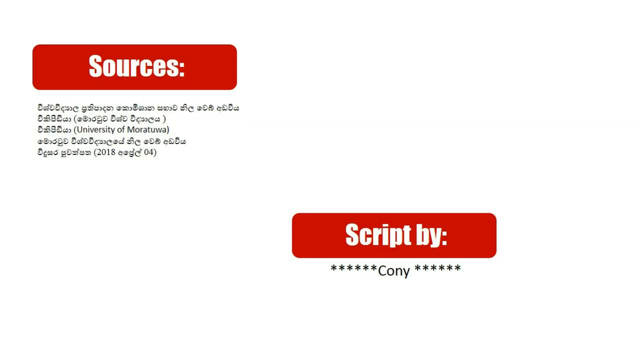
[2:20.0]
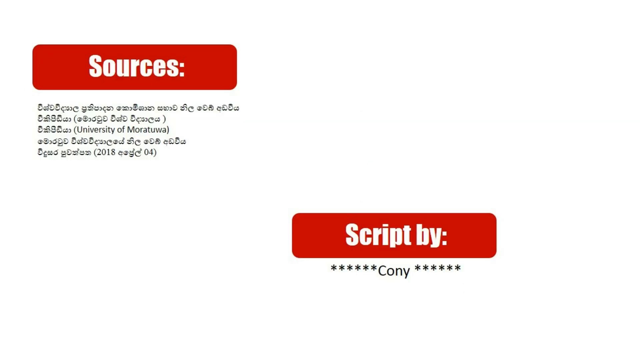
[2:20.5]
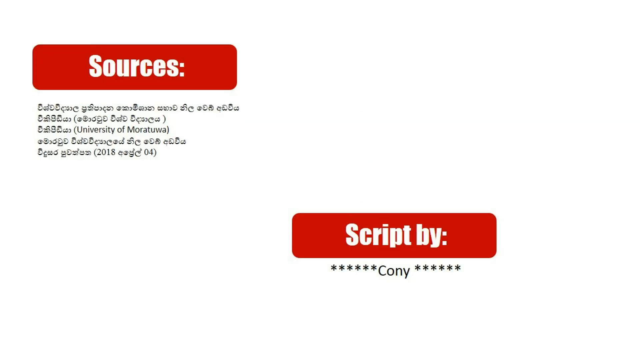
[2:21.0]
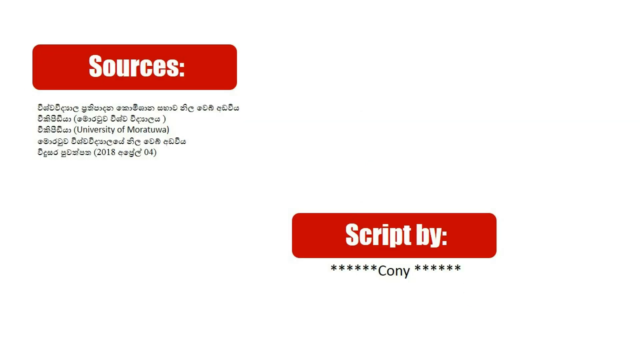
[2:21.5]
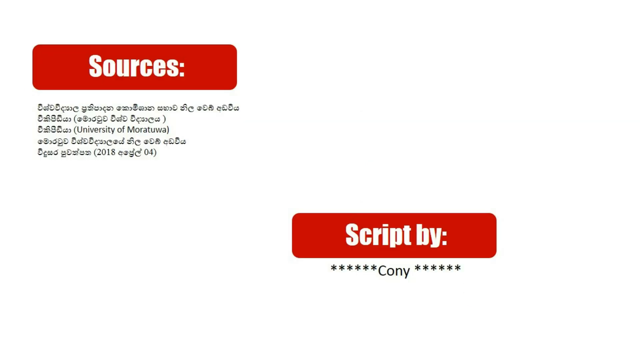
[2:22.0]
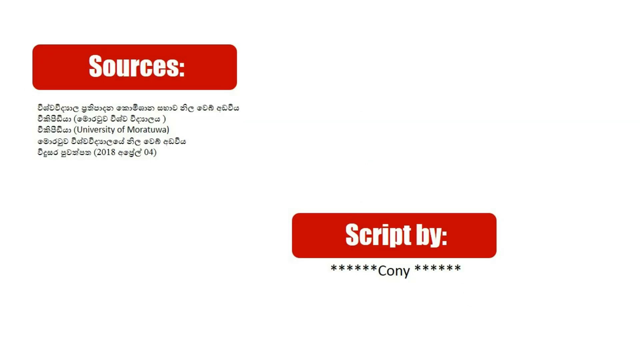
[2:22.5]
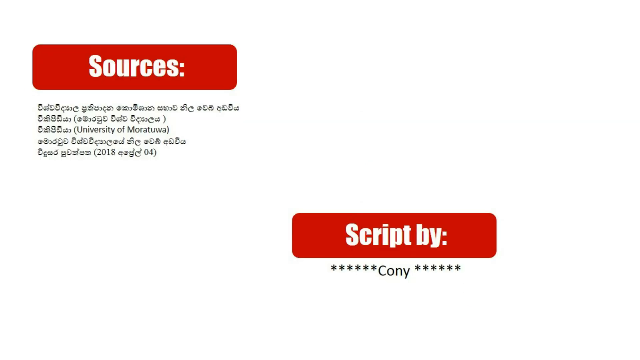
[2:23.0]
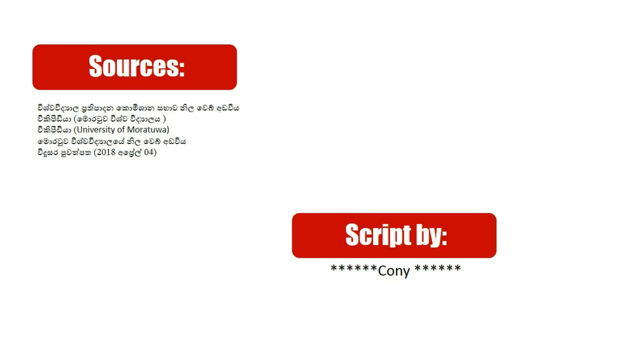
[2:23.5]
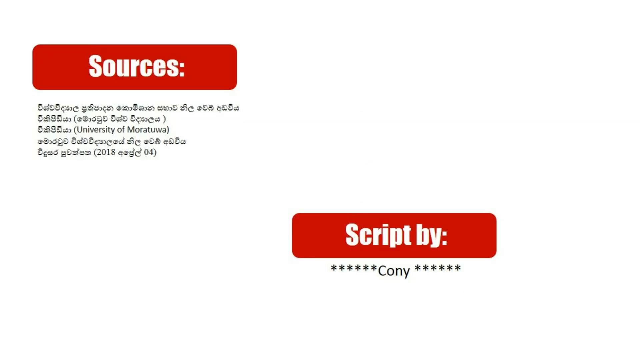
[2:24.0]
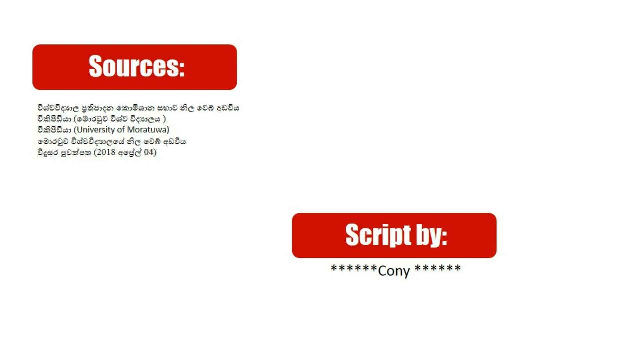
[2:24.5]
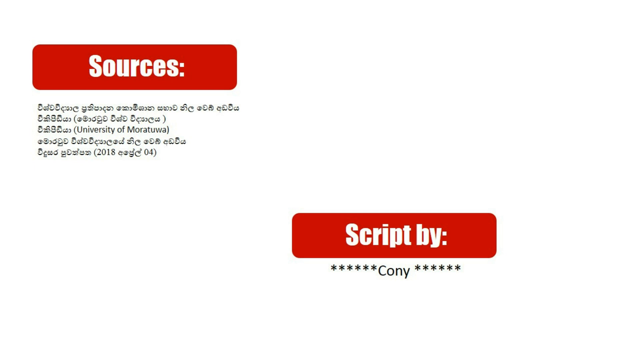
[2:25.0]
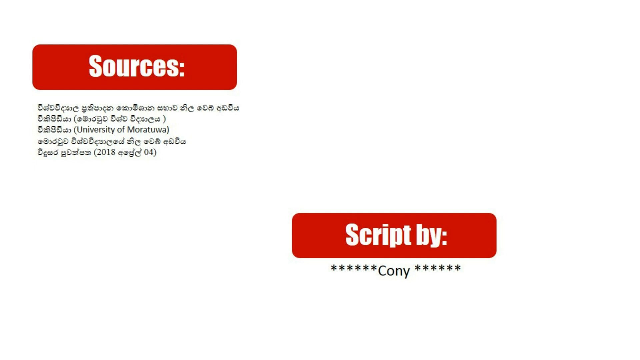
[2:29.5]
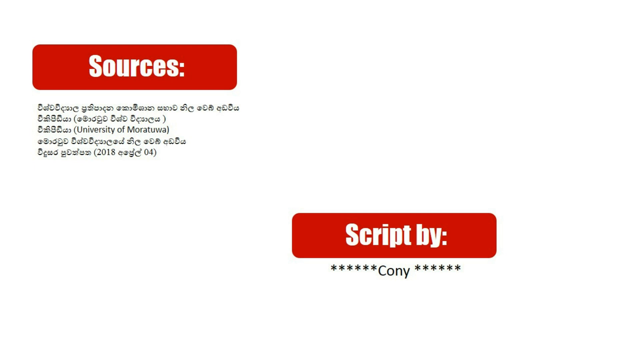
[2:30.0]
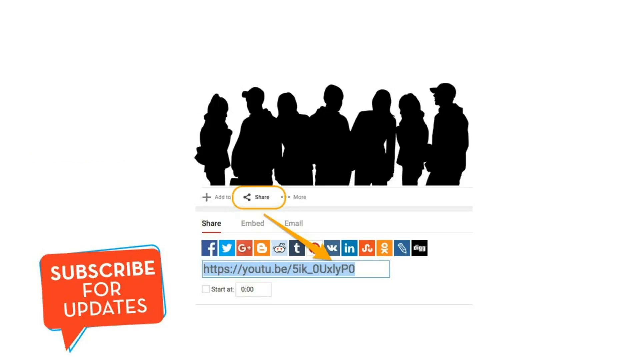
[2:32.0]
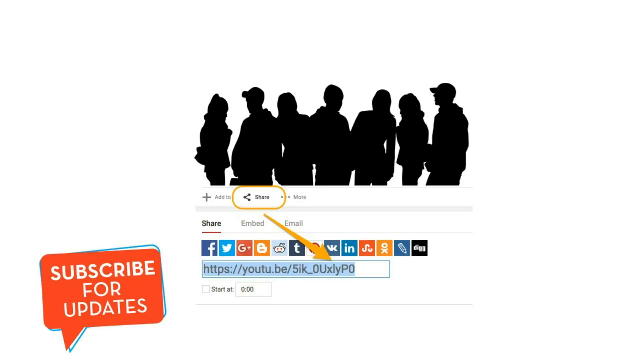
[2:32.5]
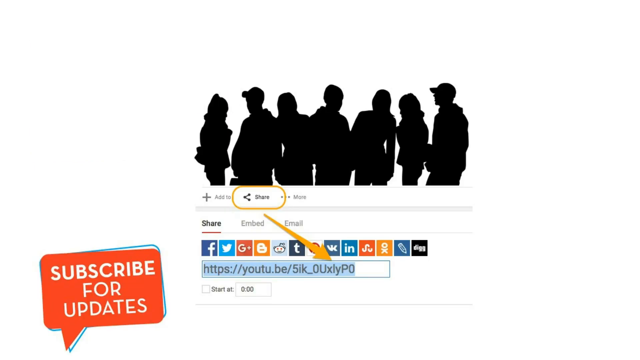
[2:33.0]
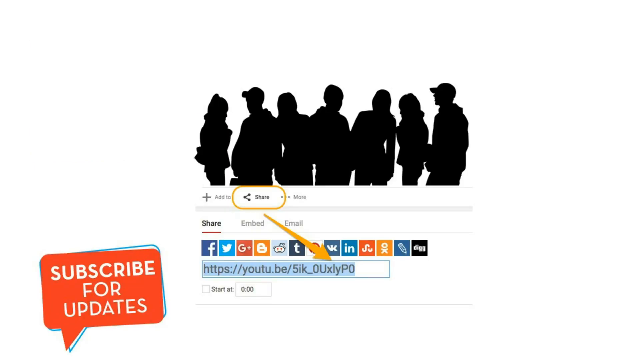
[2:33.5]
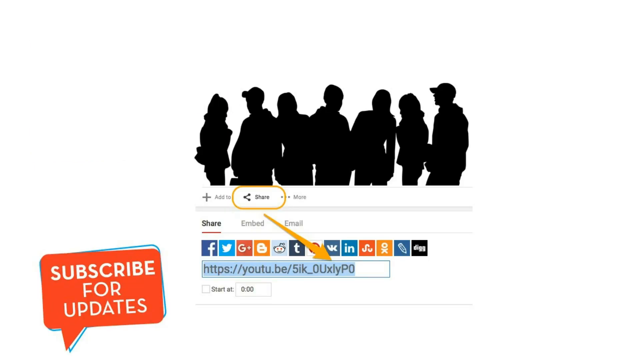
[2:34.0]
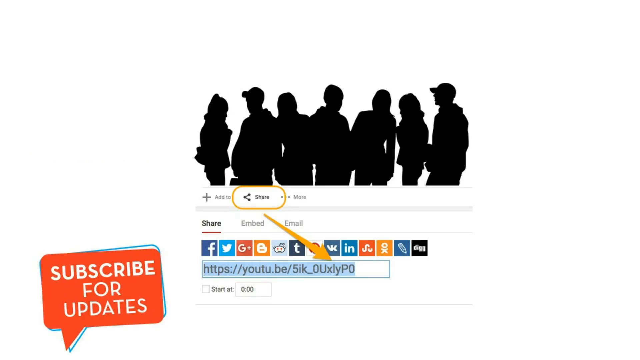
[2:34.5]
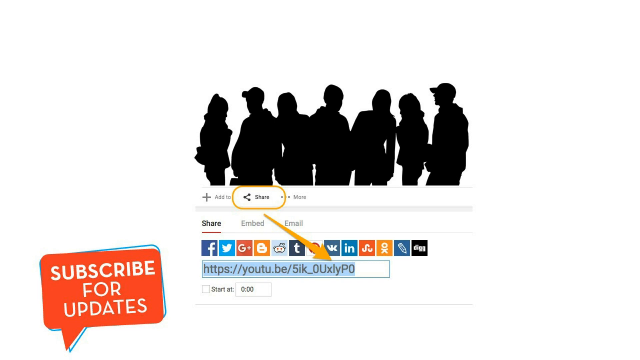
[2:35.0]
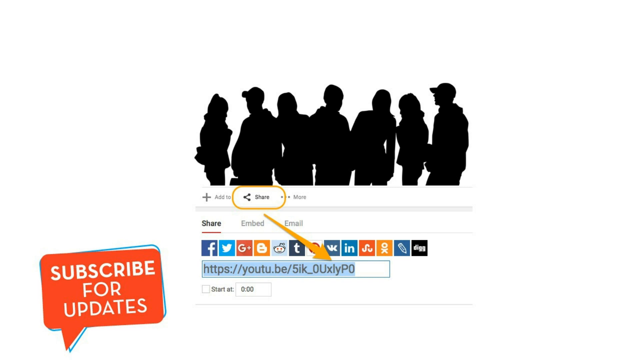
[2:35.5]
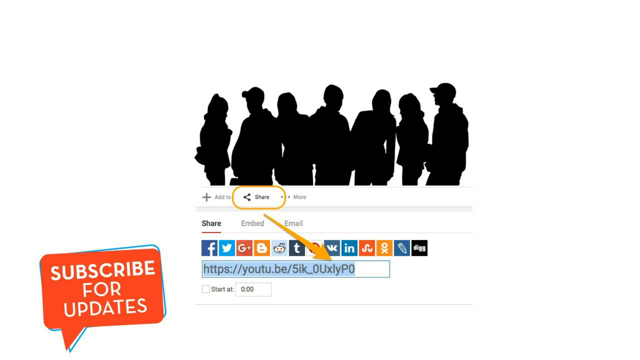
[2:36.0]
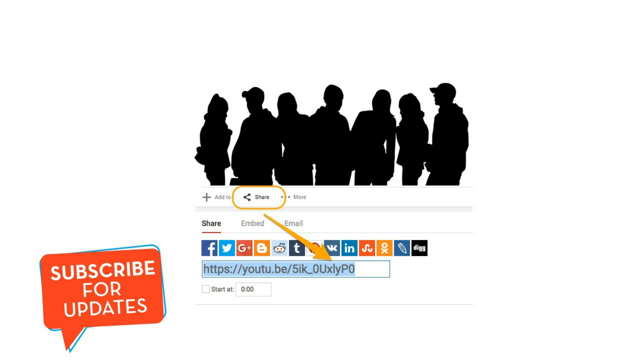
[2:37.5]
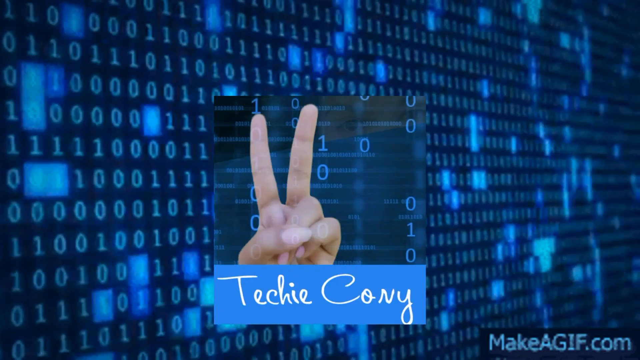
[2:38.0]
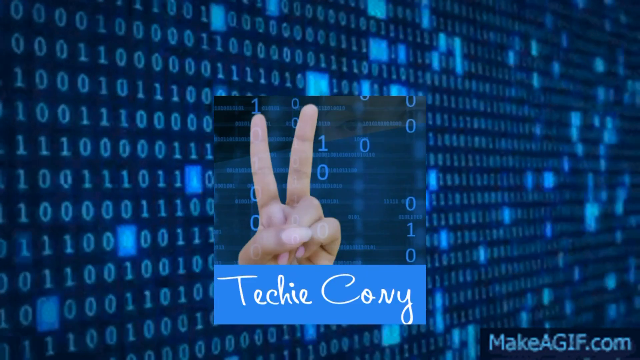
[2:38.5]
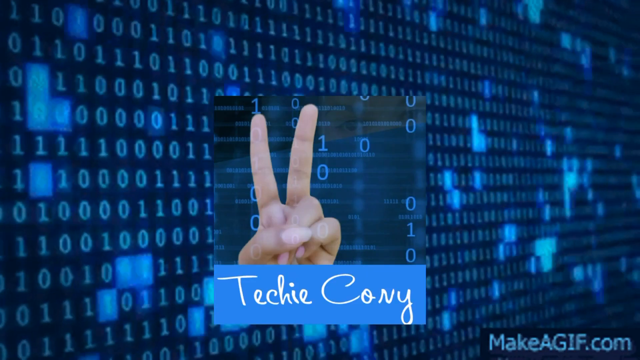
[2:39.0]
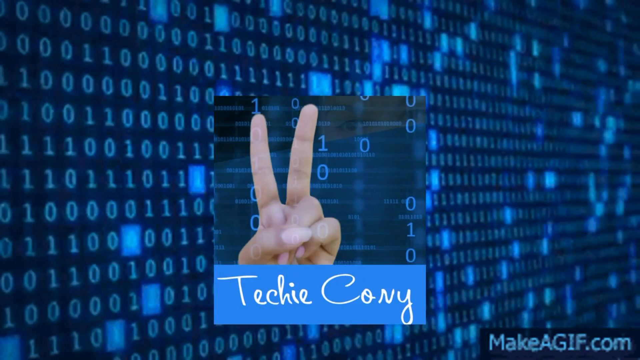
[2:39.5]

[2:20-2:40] At the top left is a "source" button in red. Beneath it are lines of Hebrew: the second line has Hebrew with parentheses, and the third line has Hebrew followed by "(University of Moratuwa)." Two more lines follow, the last with "(2018)" in parentheses. Down a little and to the right, "script by" appears in reverse print, white writing on a red background, with "Coney" in black text in the middle underneath, apparently with six black asterisk markings to the left and right of it. Then a "subscribe for updates" screen shows silhouettes of people standing; some guys wear ball caps and some girls wear jackets. Underneath is "share" with an orange oval around it and an arrow pointing down to a long YouTube link, along with thumbnails of different social media icons. "subscribe for updates" appears in red caps with white writing at the bottom left of the screen. Then the animation of binary numbers appears with a guy holding up a peace sign toward the viewer.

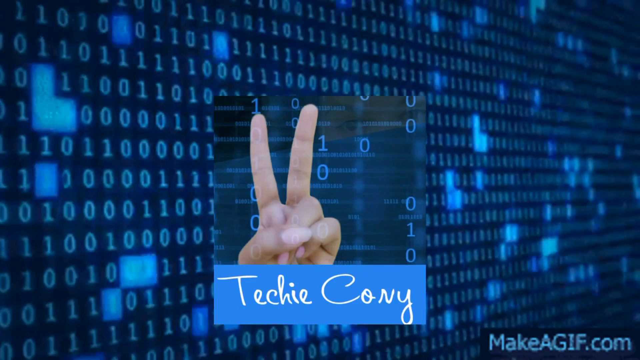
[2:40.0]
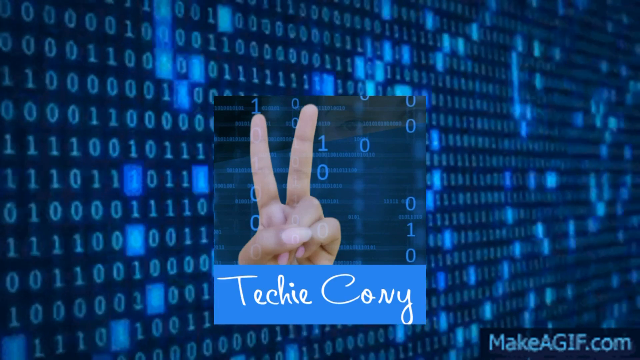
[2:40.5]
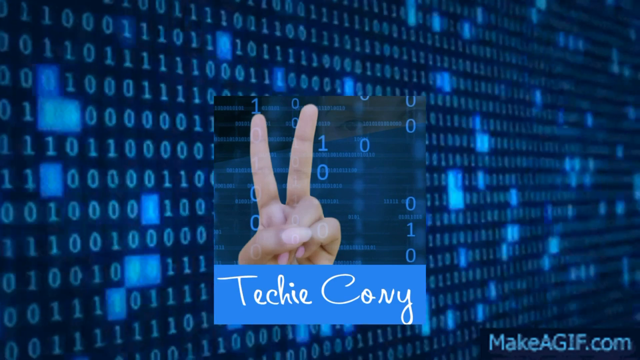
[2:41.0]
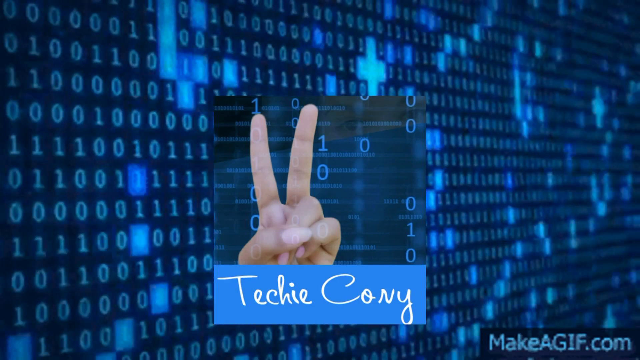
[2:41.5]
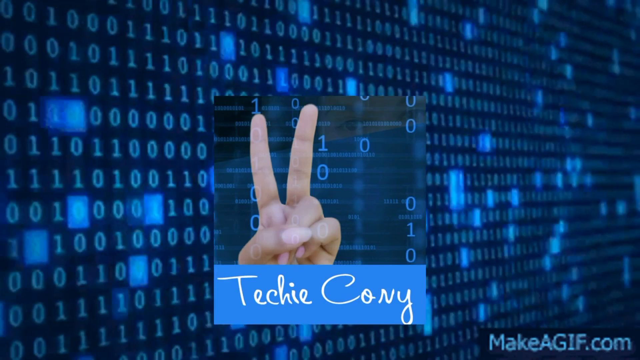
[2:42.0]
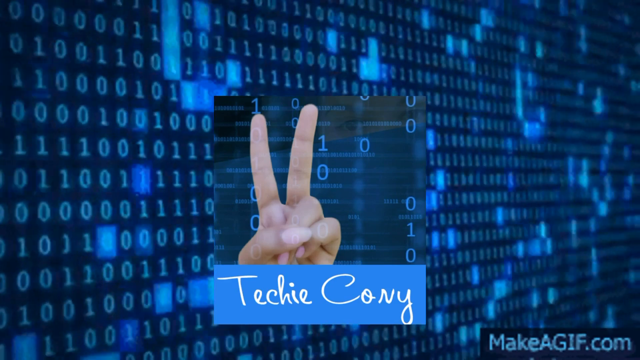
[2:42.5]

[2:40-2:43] A bunch of little light blue boxes move randomly across the screen behind. The background is tilted, with the left side closer and the right side further back, making the binary numbers harder to make out. A small embossed graphic is in the middle, and underneath, in white script inside a blue box, it says "techie convey" or "Covey," with the peace sign above it. It is a static image; the binary numbers are not moving.